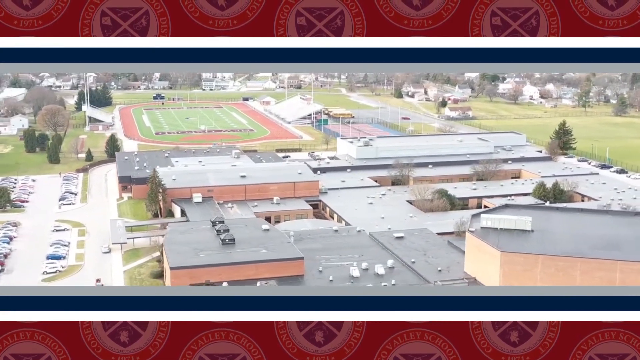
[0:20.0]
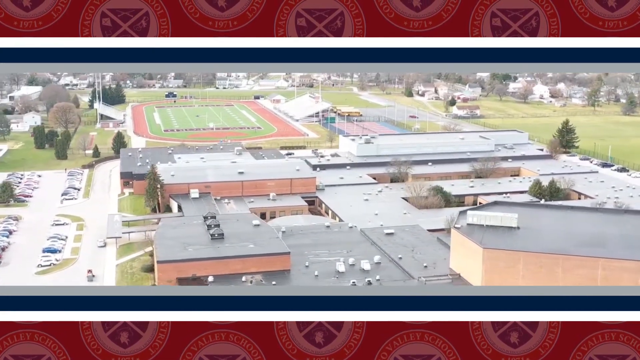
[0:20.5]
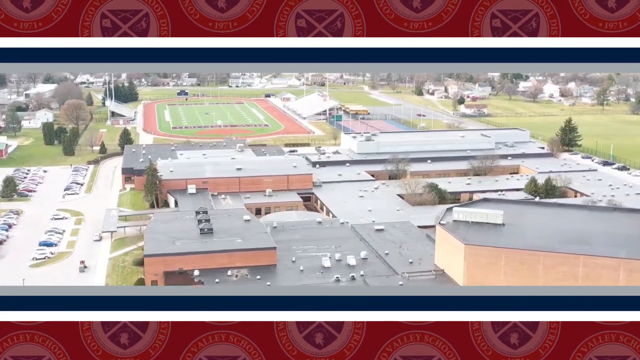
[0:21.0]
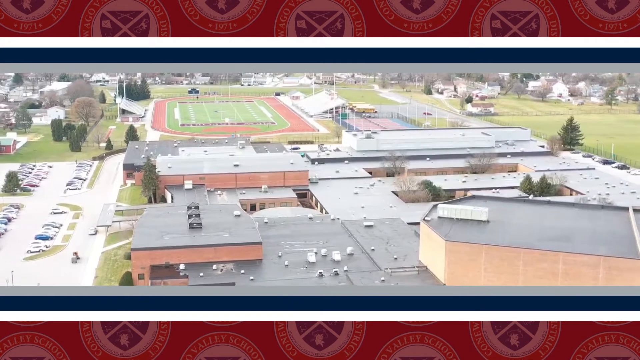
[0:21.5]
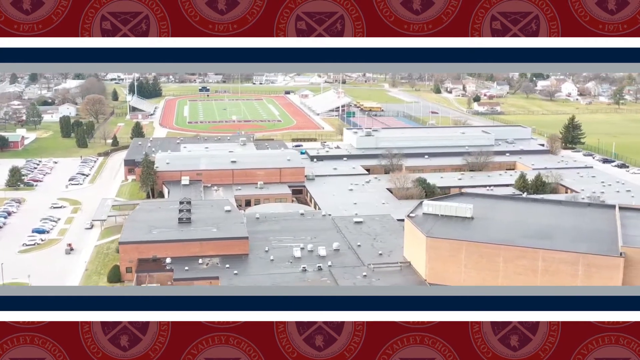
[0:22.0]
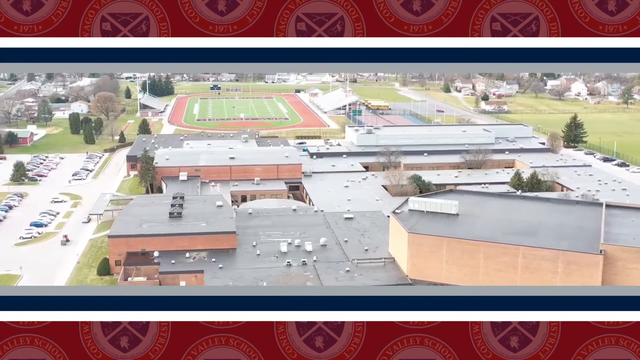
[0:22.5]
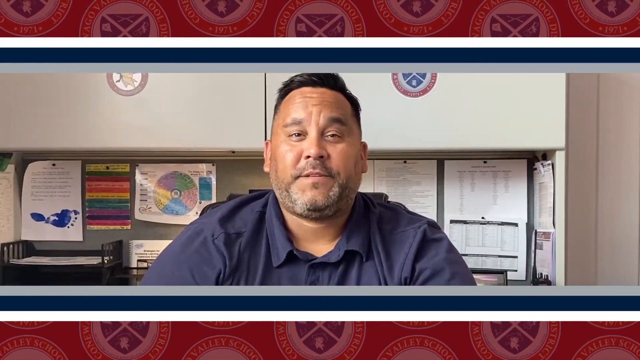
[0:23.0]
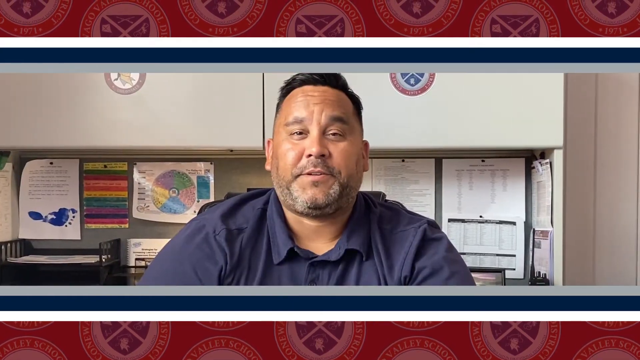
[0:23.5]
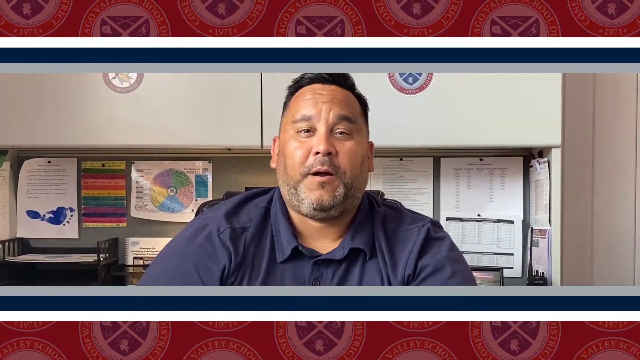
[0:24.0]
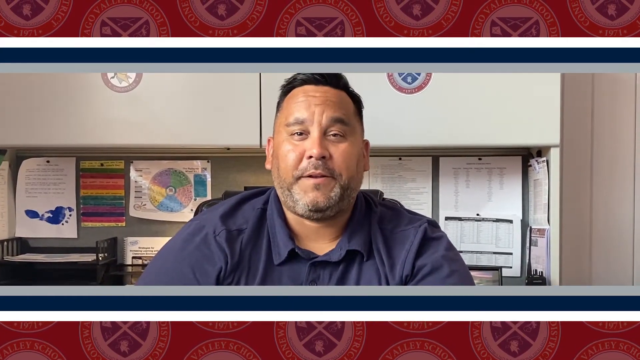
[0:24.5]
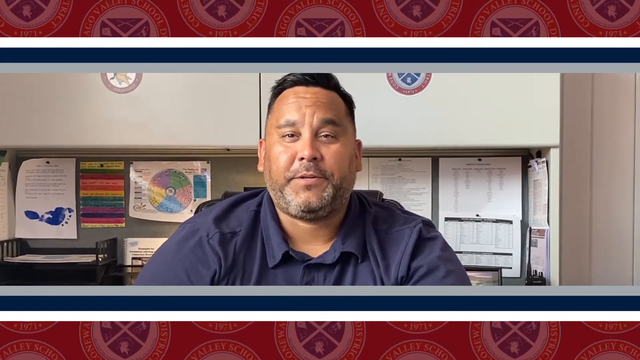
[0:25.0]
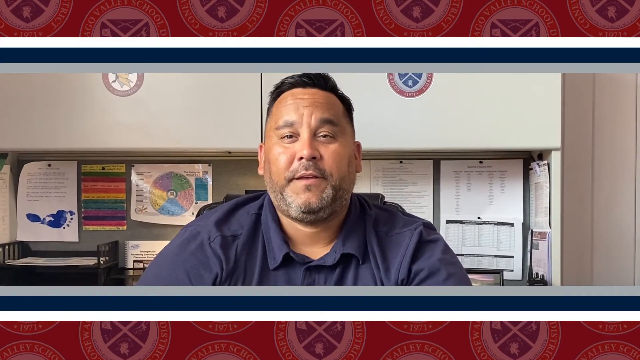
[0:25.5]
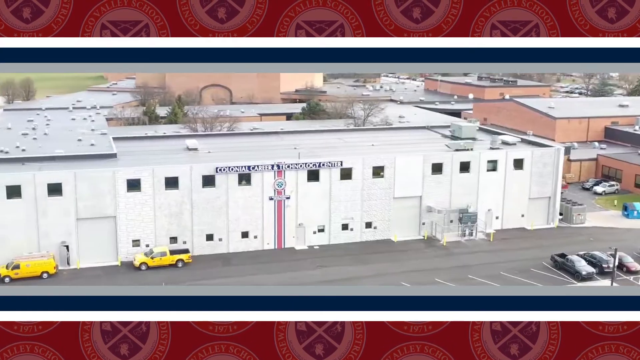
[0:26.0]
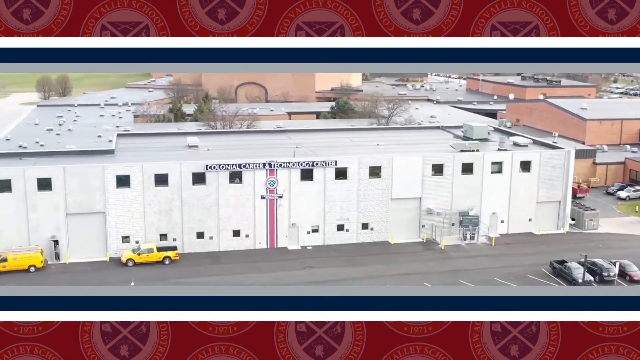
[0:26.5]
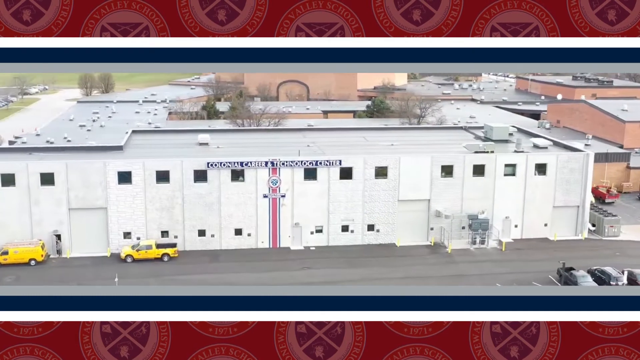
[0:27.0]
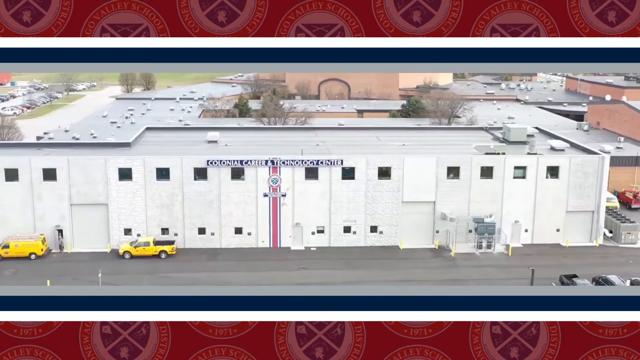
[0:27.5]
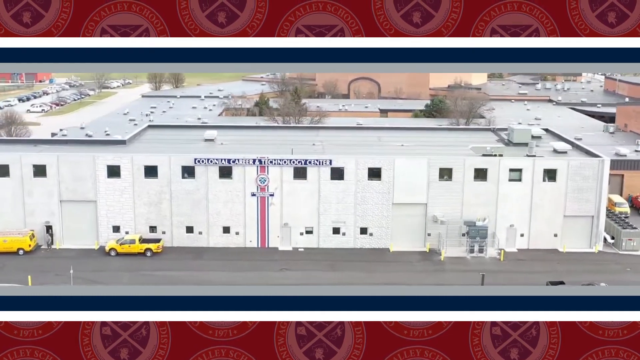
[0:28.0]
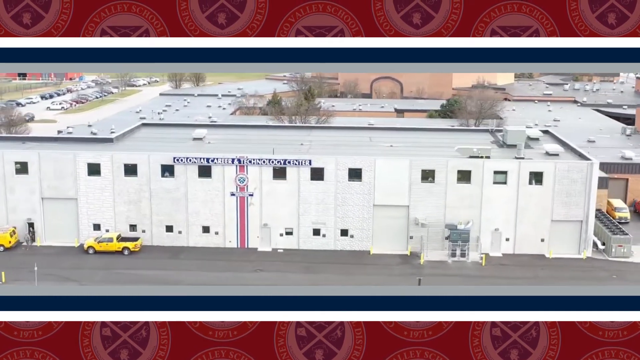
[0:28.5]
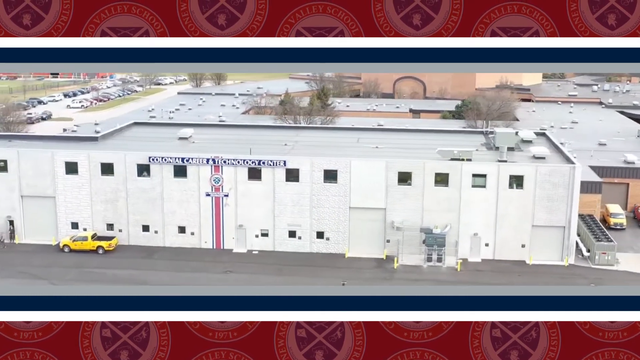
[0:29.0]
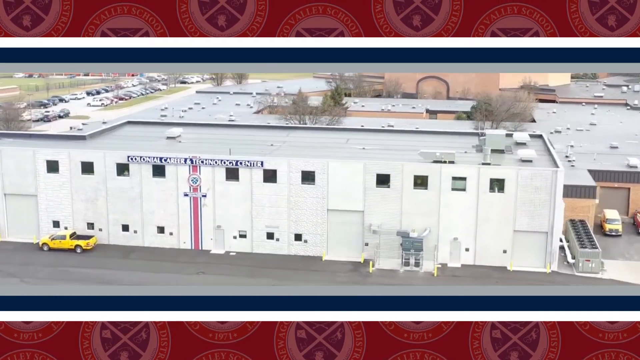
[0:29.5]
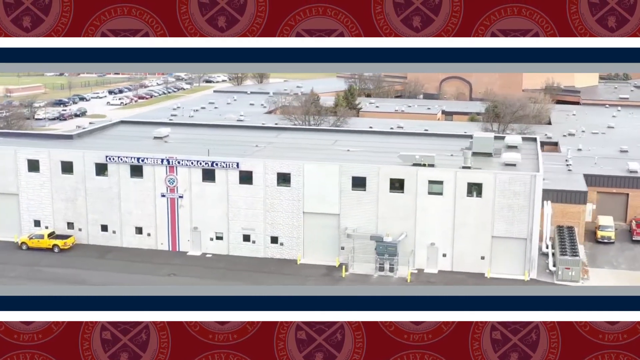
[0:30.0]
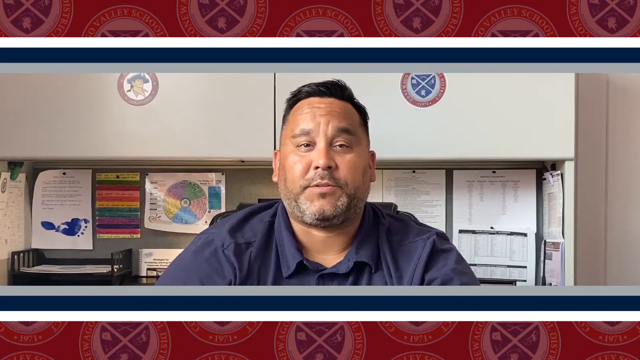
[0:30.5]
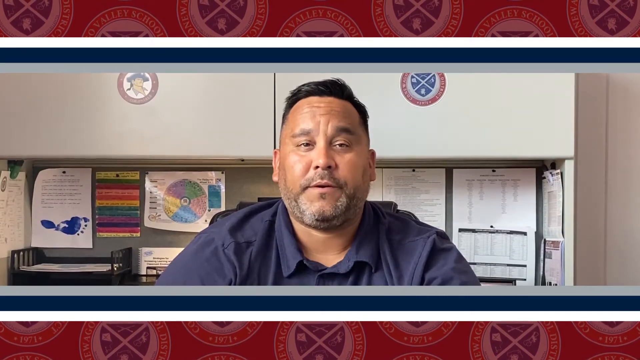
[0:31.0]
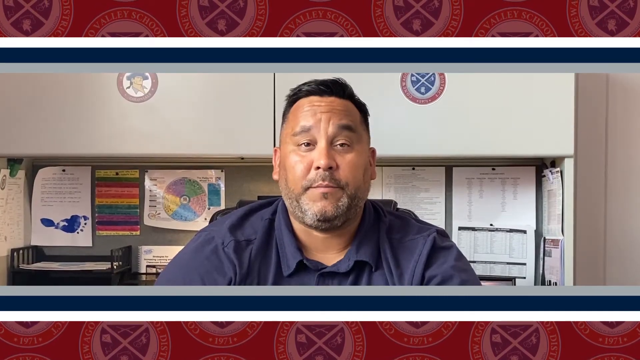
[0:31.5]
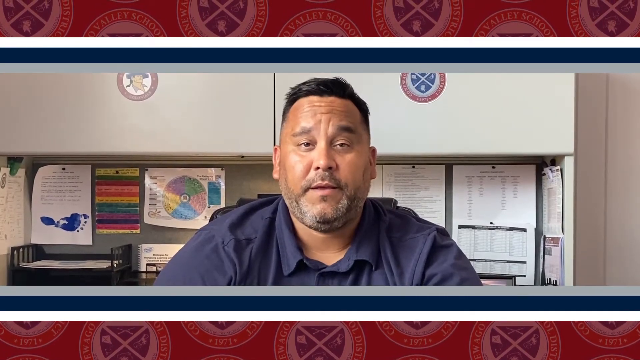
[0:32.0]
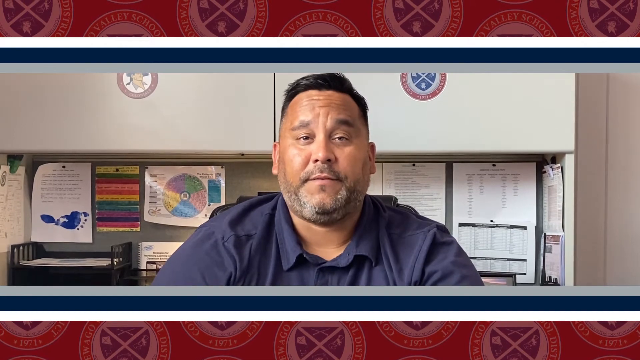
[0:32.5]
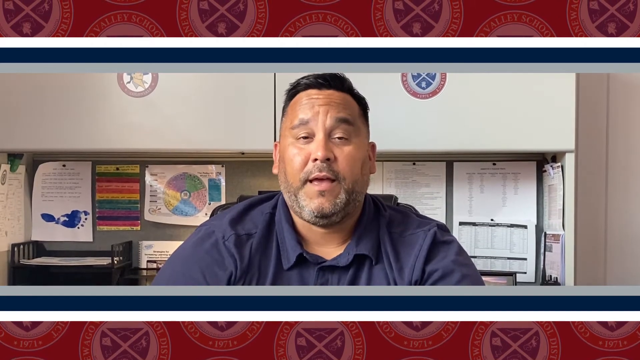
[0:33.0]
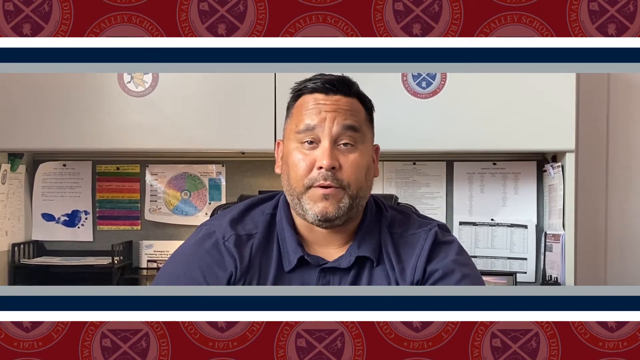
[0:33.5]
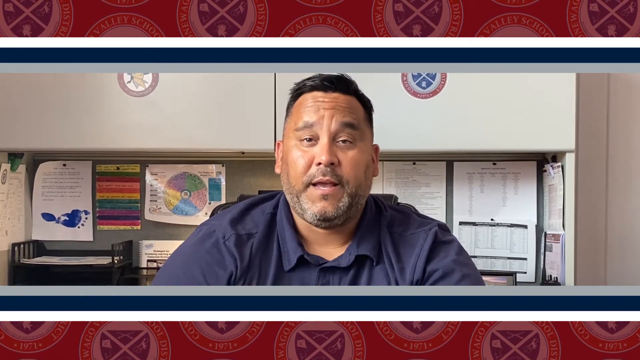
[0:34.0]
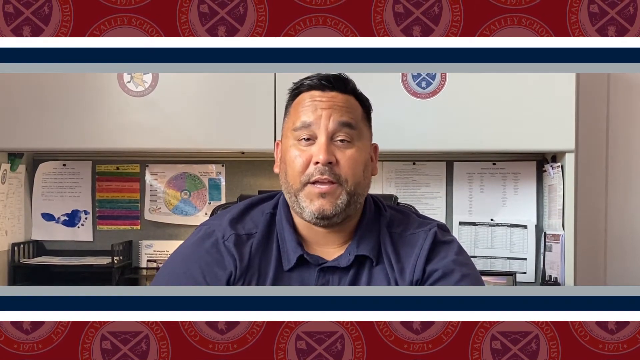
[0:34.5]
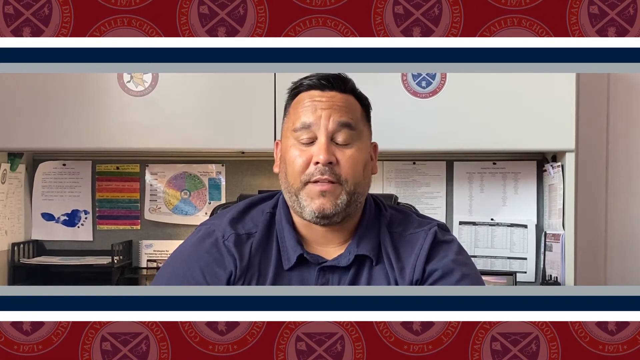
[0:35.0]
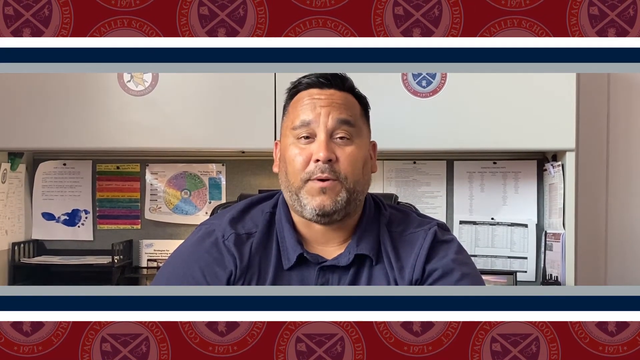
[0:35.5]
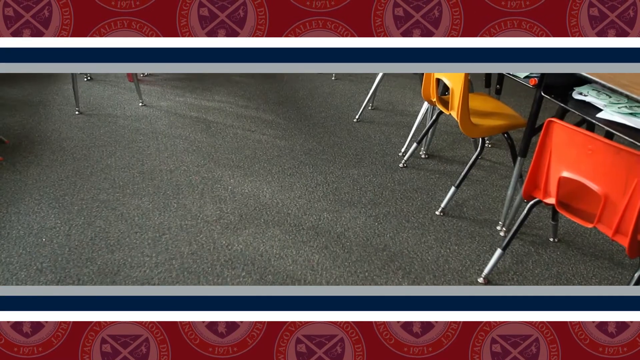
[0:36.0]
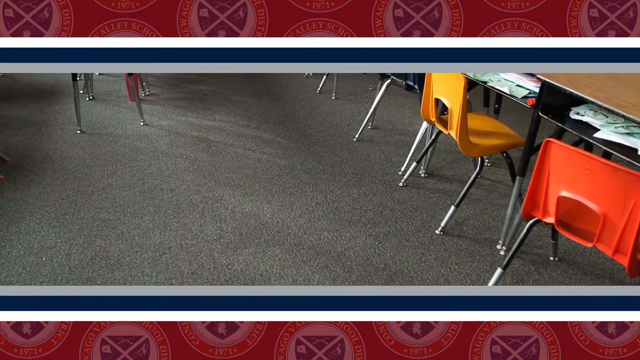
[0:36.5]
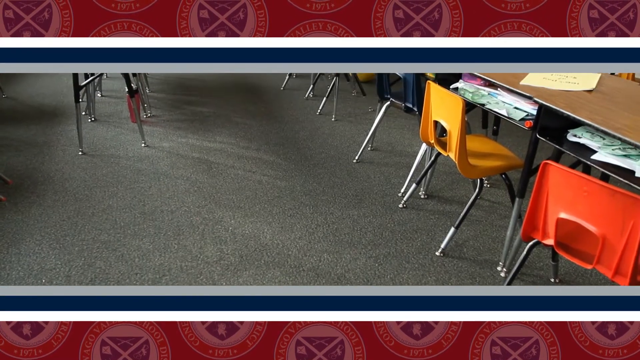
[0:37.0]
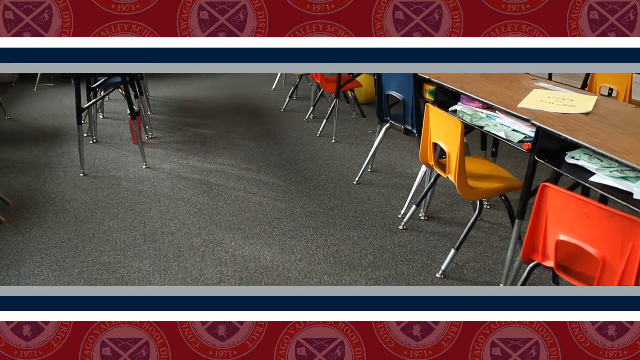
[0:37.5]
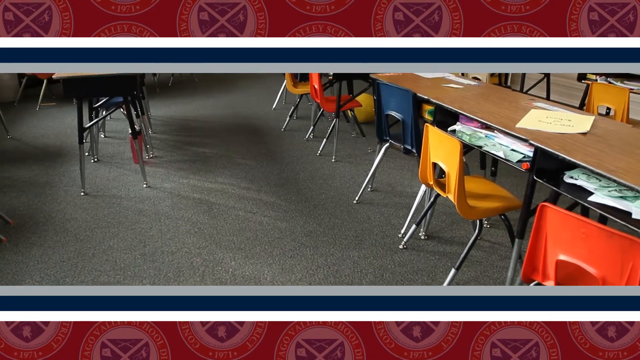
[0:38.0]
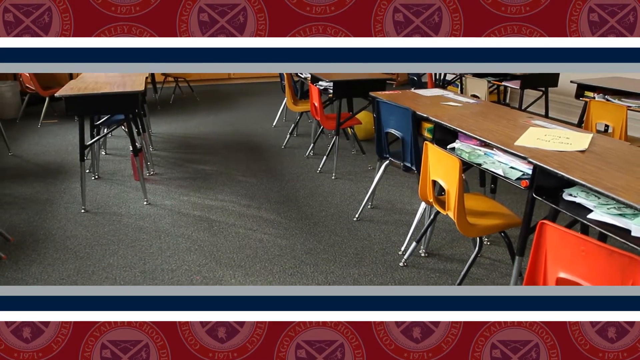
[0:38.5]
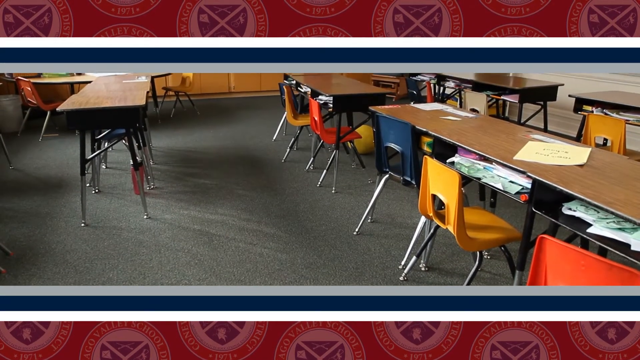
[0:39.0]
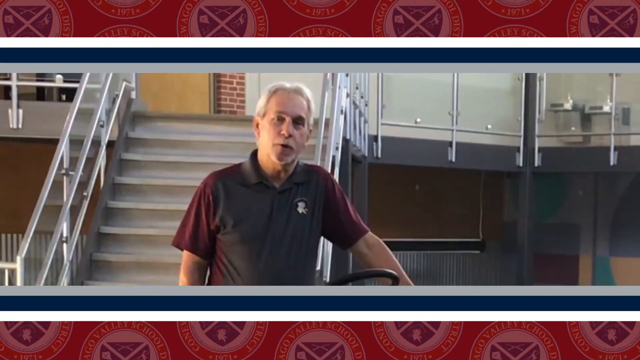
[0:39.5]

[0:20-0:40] The aerial view of the complex continues rotating around to the right, then transitions to a man speaking to the camera. He appears to be in some sort of office, with cabinets behind him and many papers pinned to the wall. The video then transitions to an aerial view of another building: a white two-story building with garage doors on the side and yellow vehicles parked out front. It has text and a logo on the front. The camera moves over to the right side as it rotates around the building, panning left. The video then returns to the man, who continues speaking to the camera; he wears a blue collared shirt. Next comes a view of what appears to be a child's classroom, with very small yellow and red chairs and long tables with cubby holes underneath, full of paper.